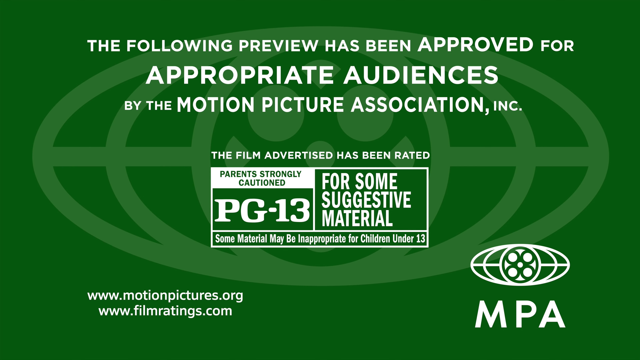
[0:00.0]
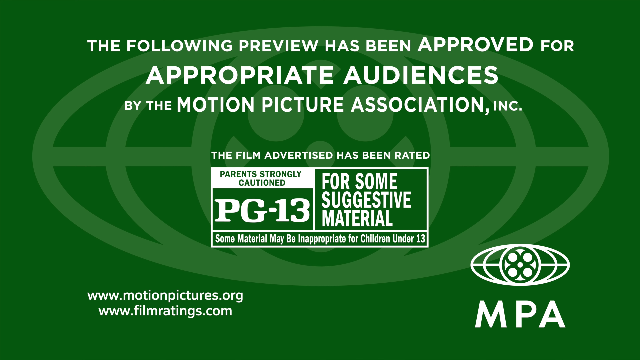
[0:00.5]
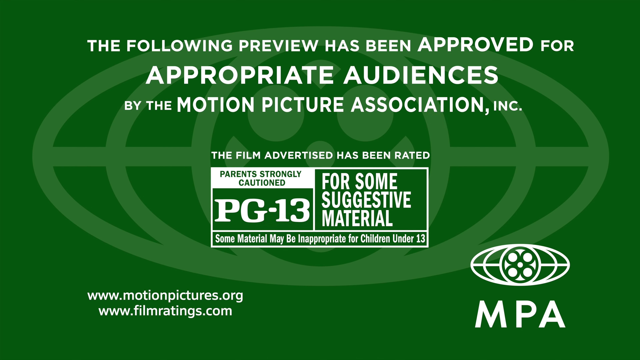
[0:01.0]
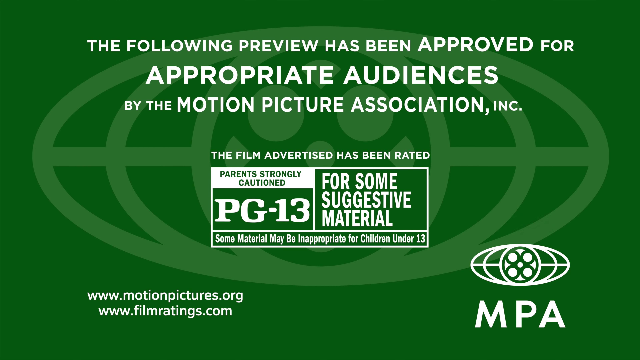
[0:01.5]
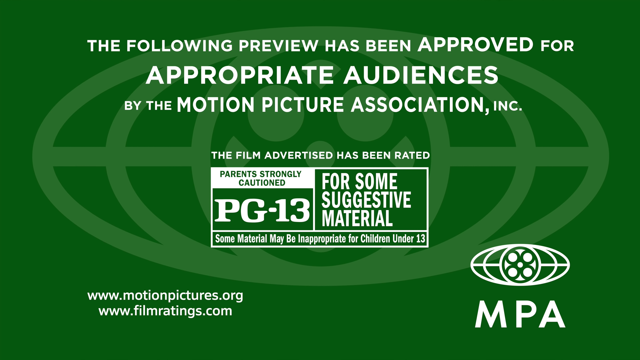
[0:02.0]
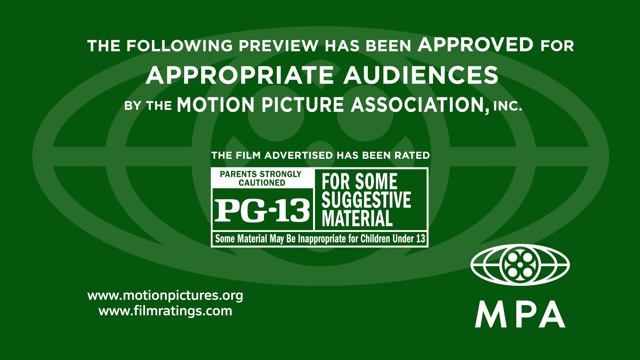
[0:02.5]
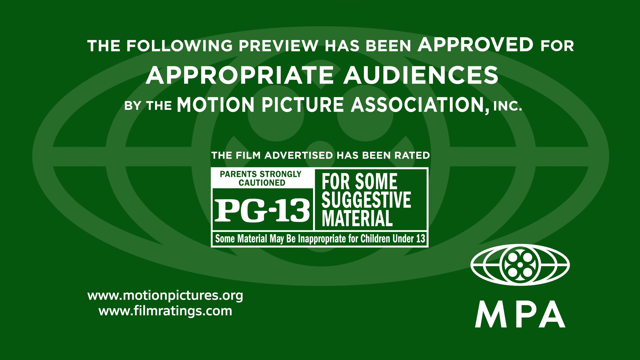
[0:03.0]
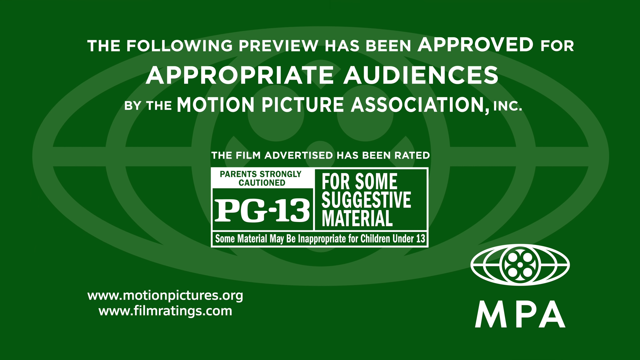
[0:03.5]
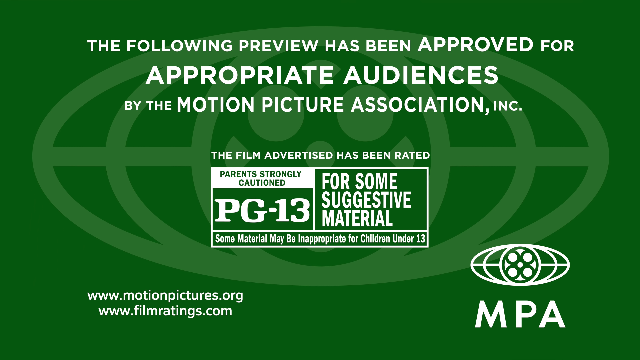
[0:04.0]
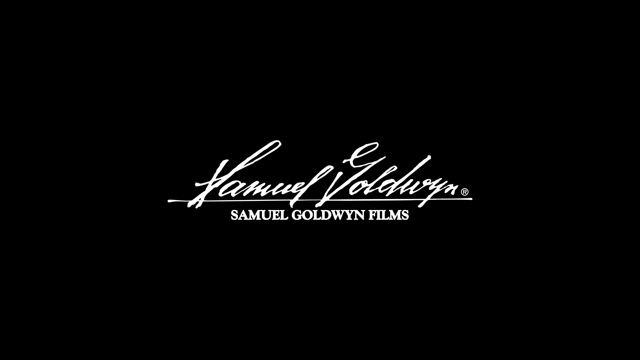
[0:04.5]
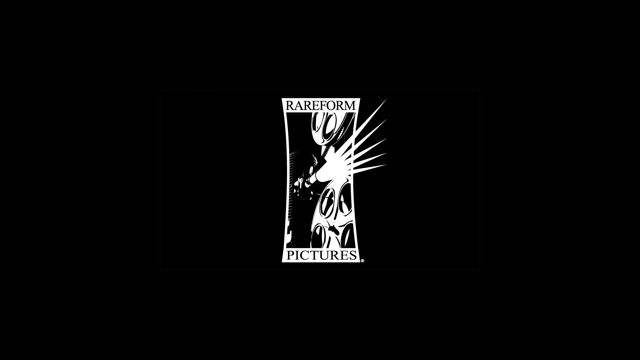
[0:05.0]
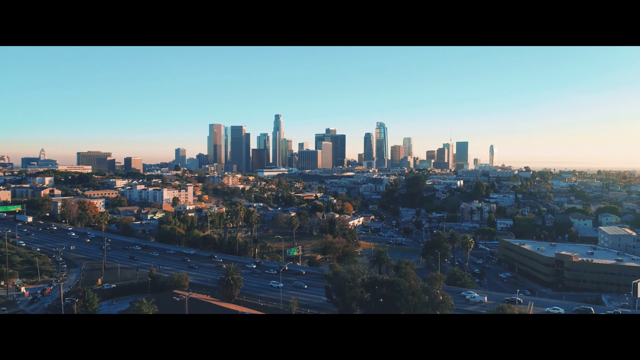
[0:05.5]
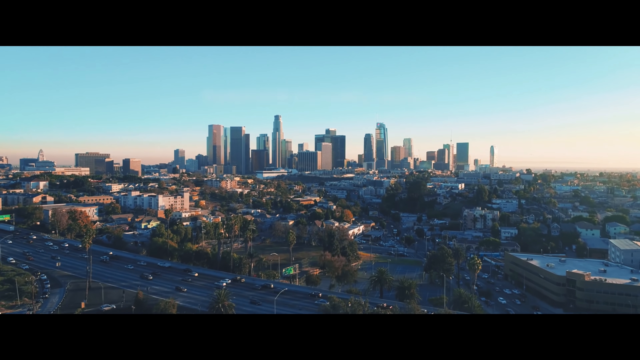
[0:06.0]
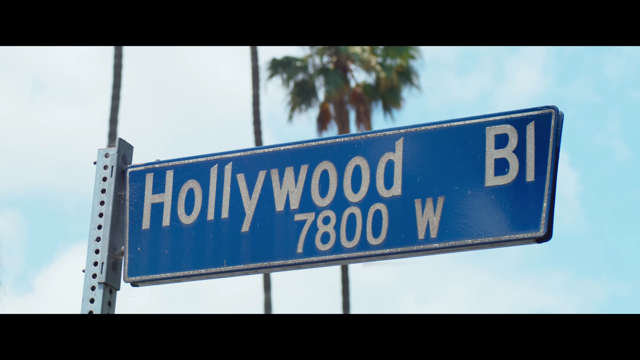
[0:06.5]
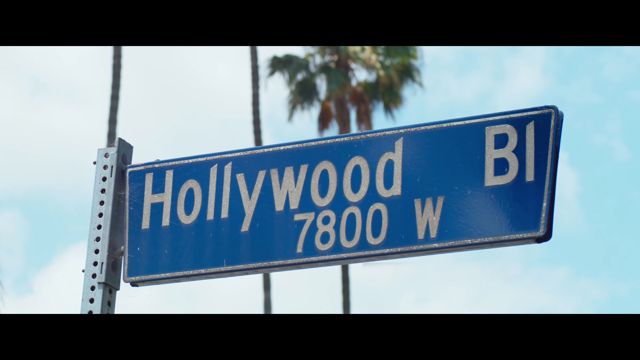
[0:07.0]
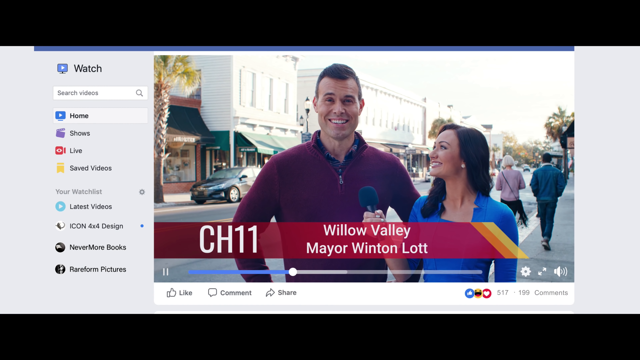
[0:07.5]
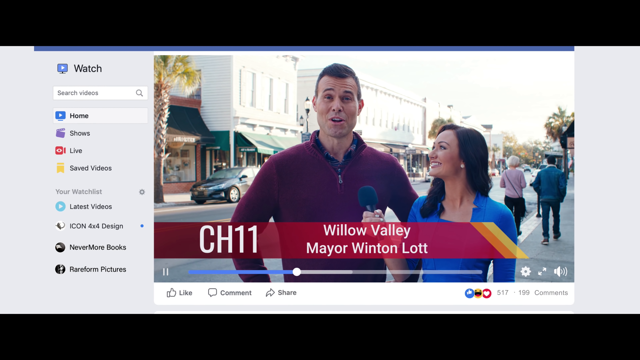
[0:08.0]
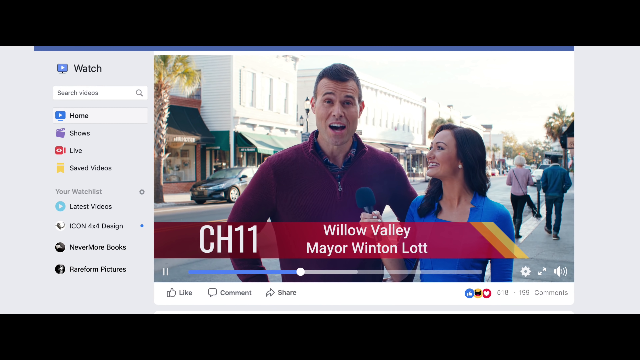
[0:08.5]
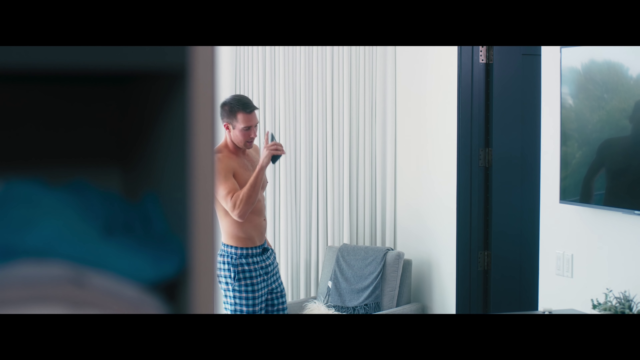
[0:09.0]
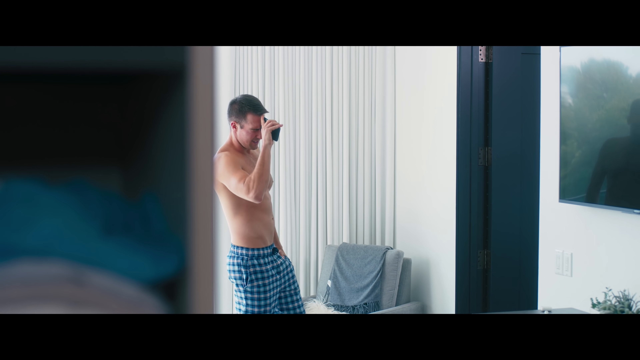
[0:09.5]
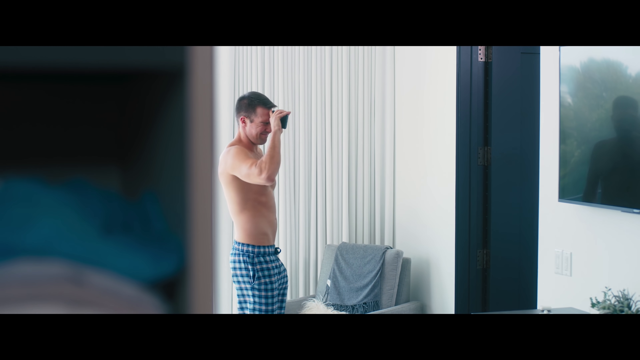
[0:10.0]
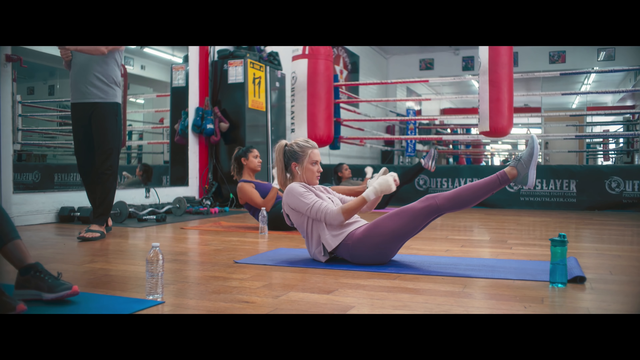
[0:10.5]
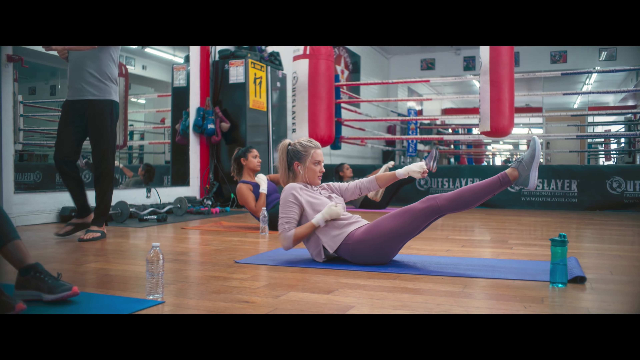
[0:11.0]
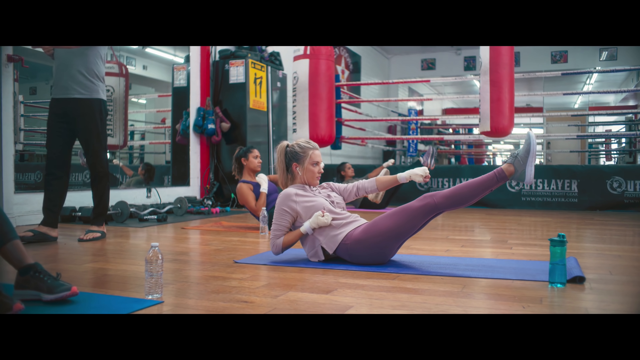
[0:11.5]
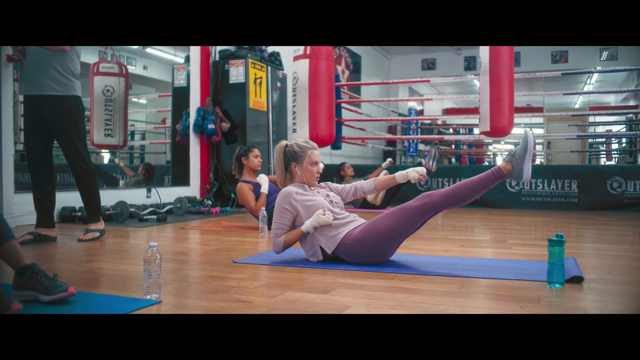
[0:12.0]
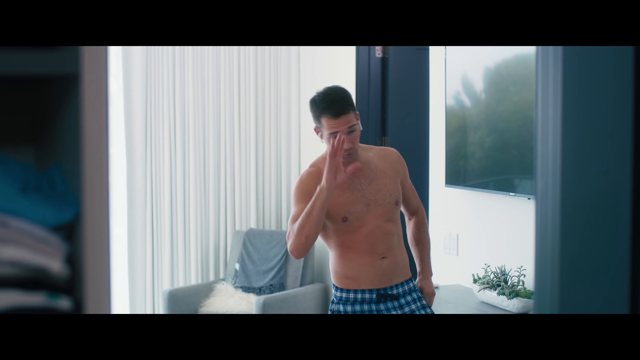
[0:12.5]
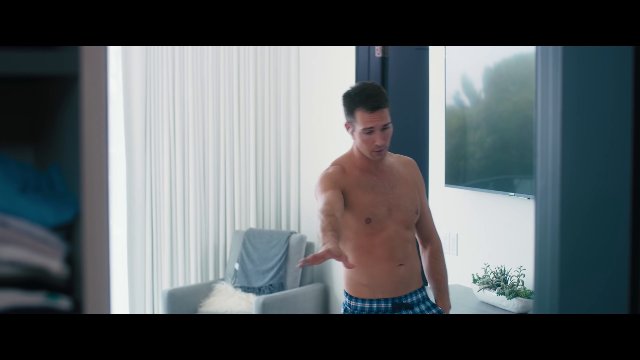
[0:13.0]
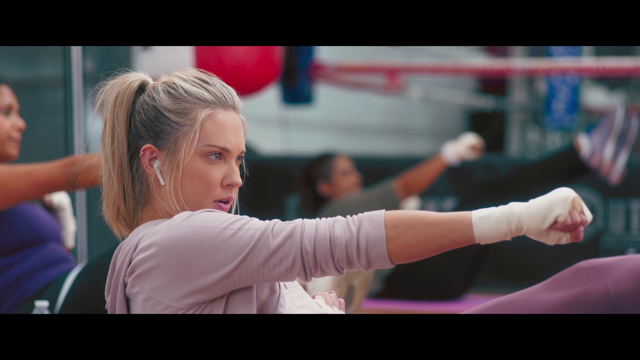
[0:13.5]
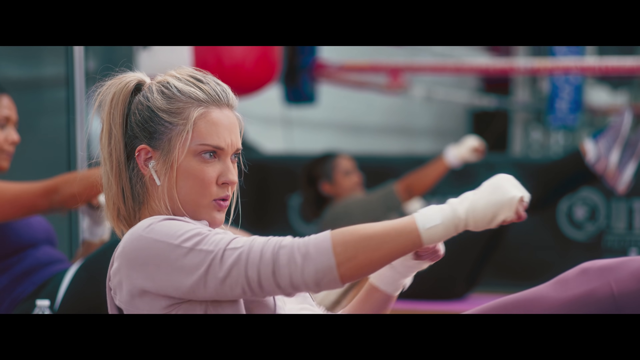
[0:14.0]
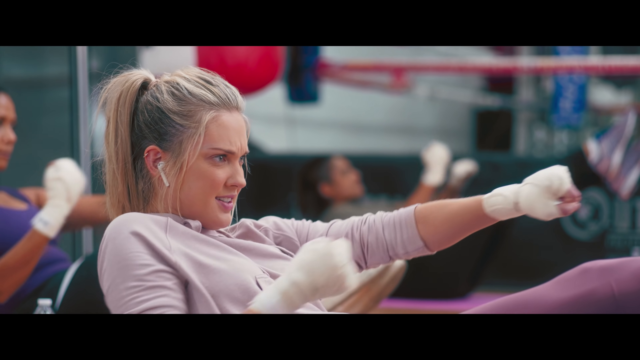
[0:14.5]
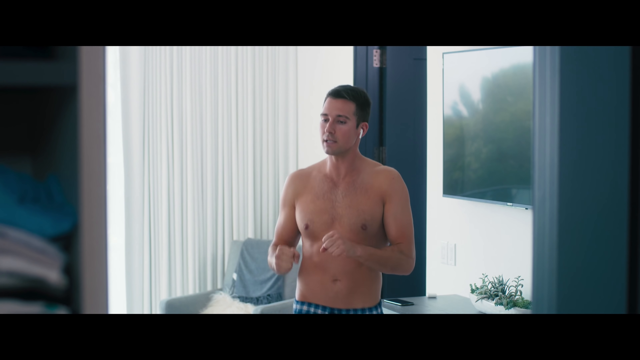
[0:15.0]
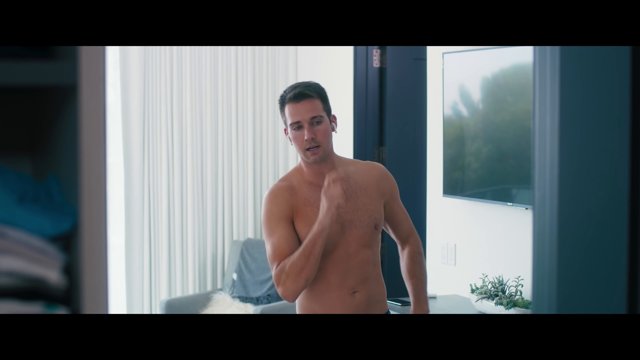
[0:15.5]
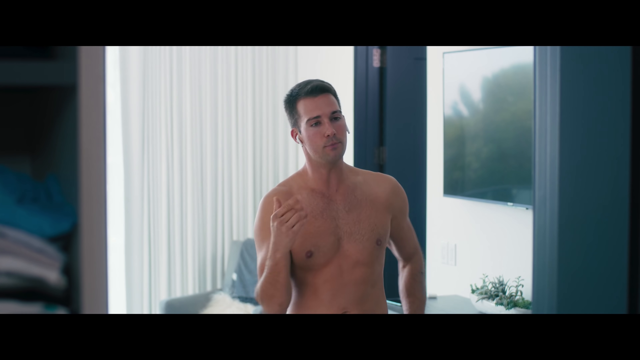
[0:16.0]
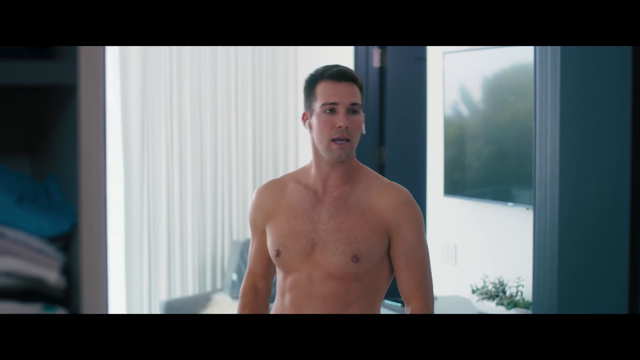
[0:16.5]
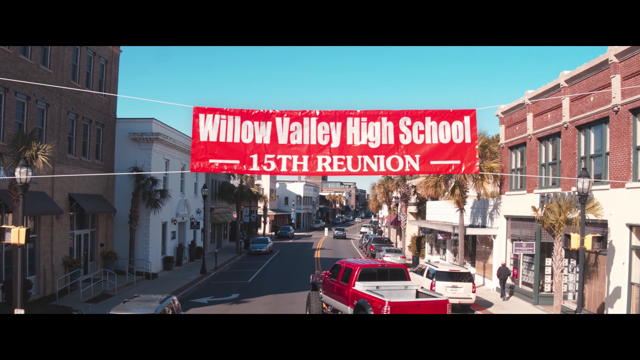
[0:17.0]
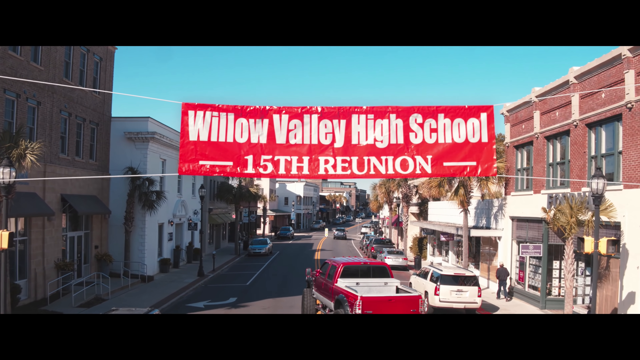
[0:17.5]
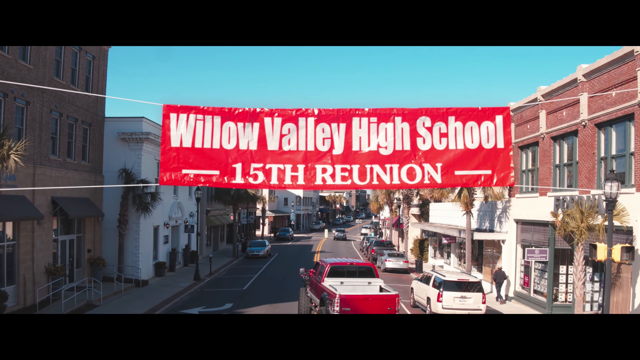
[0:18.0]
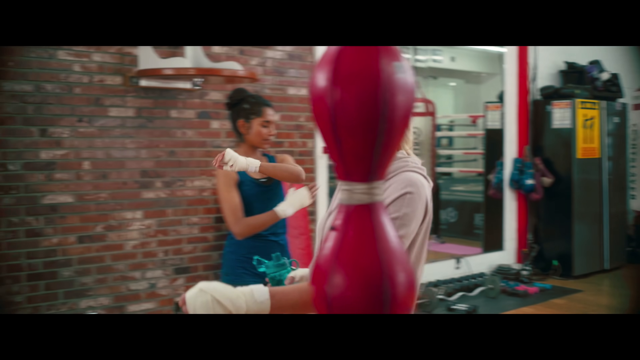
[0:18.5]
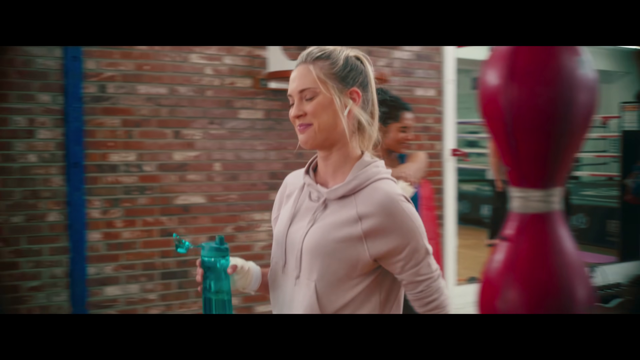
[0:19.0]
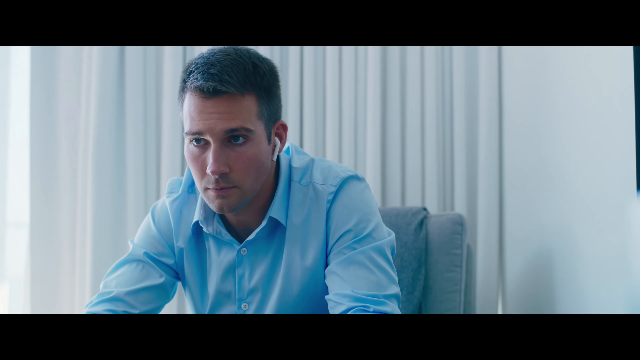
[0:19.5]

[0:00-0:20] An opening screen states that the following preview has been approved for appropriate audiences by the Motion Picture Association, and that the film advertised has been rated parents strongly cautioned, for some suggestive material. People are then interviewed, one woman is busy trimming her hair, and another woman is at the gym, talking with a man. A Willow Valley High School 15th reunion is shown. The woman keeps speaking to the man; he has finished preparing himself while she is still at the gym, still talking to him. Both of them are wearing earpods while they talk.